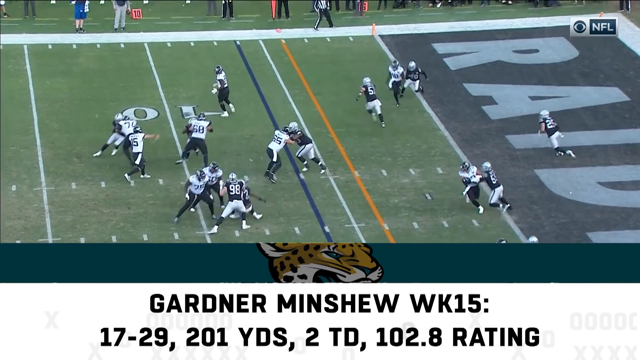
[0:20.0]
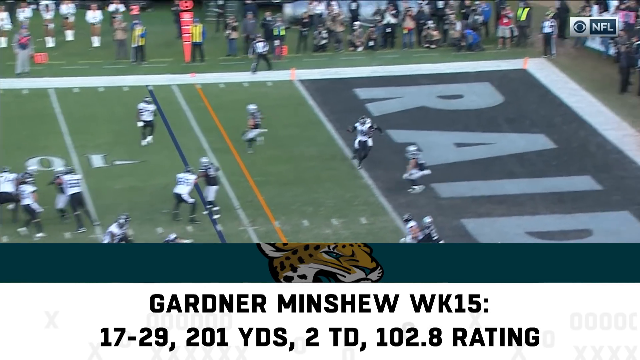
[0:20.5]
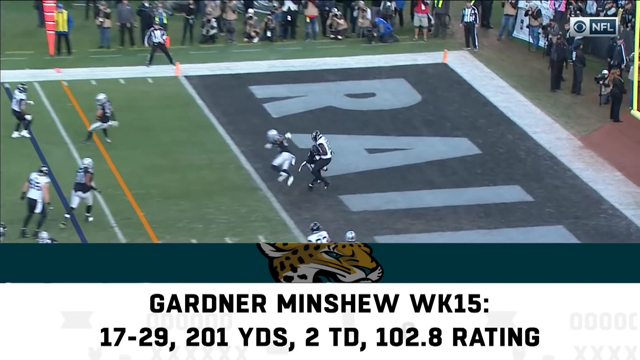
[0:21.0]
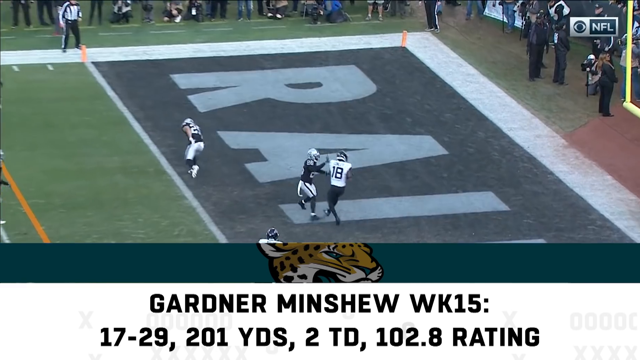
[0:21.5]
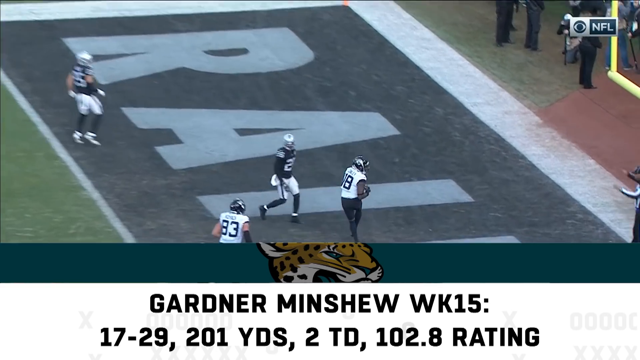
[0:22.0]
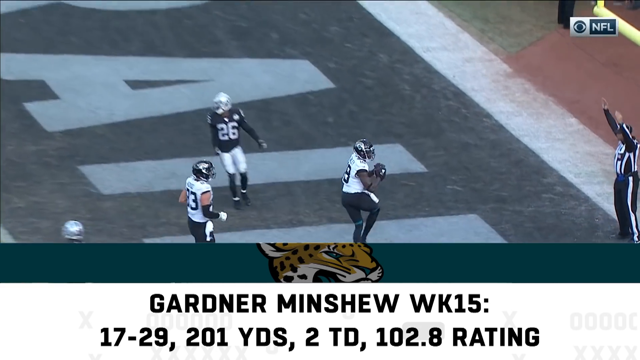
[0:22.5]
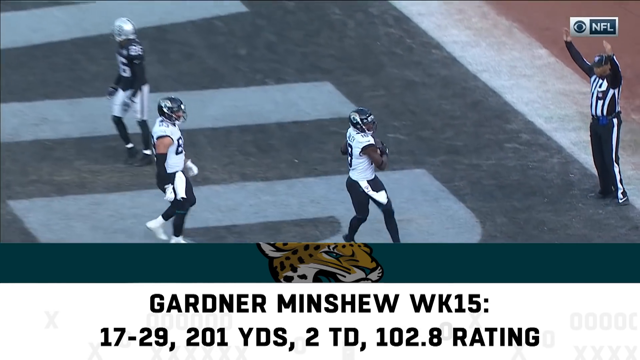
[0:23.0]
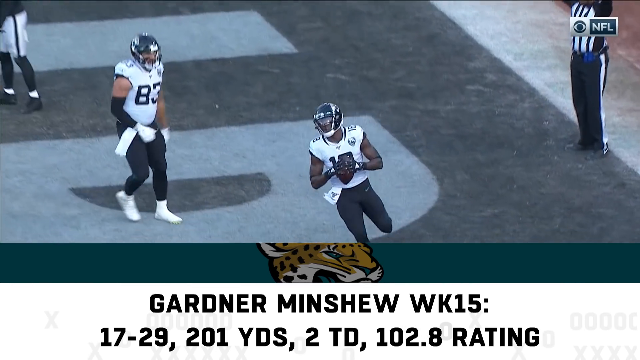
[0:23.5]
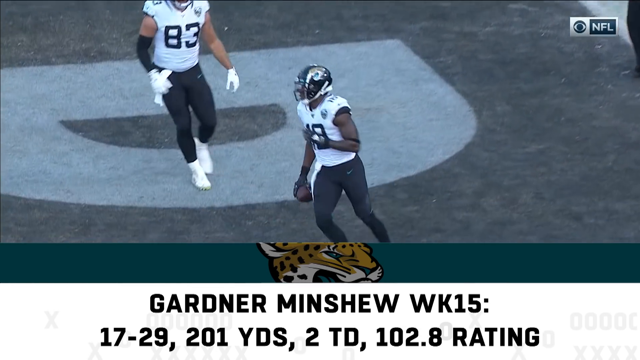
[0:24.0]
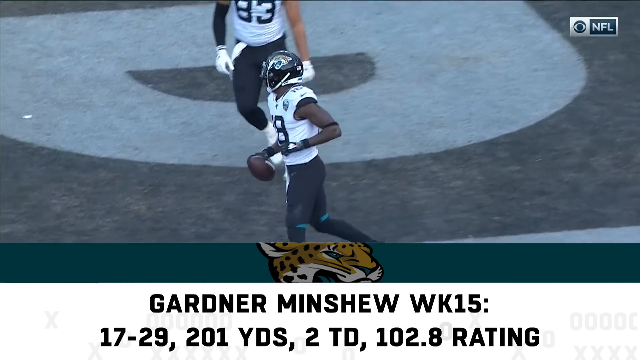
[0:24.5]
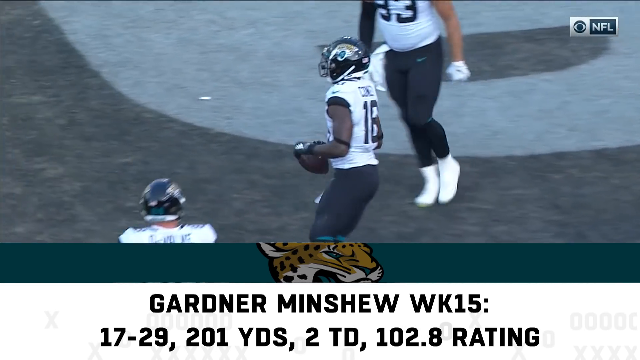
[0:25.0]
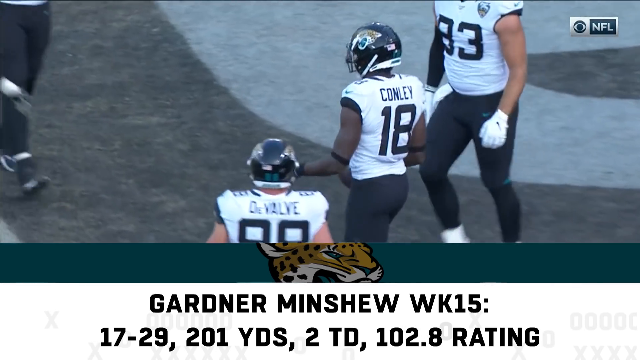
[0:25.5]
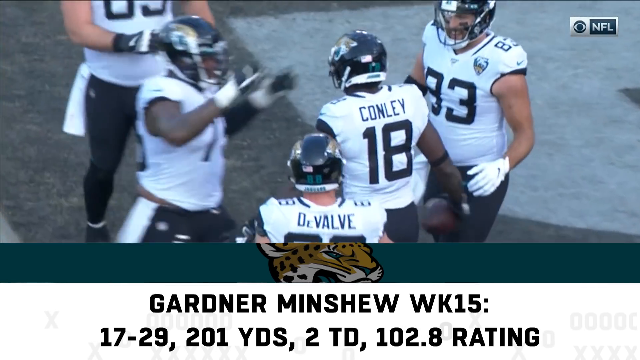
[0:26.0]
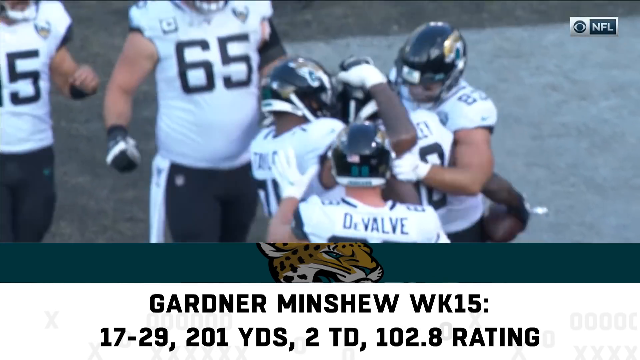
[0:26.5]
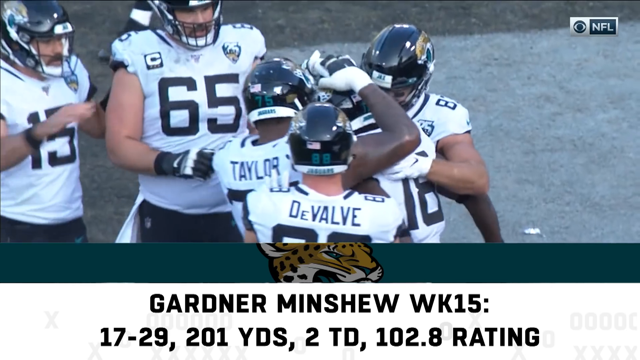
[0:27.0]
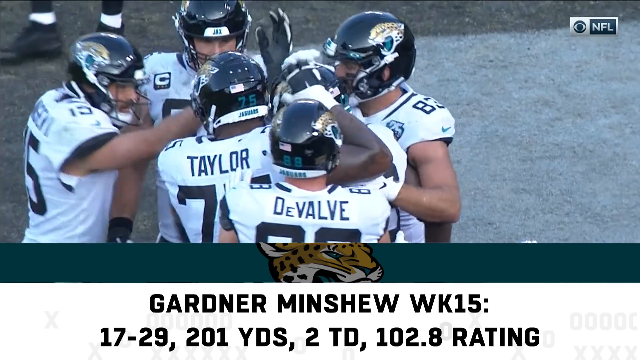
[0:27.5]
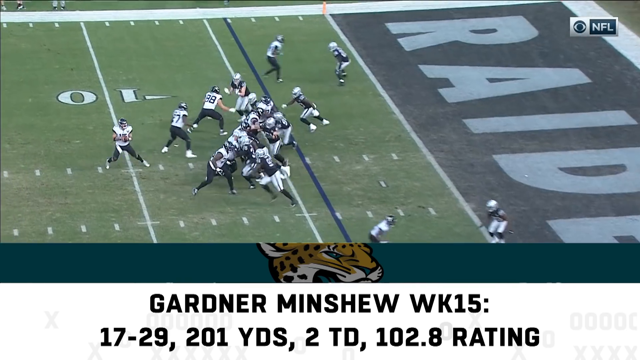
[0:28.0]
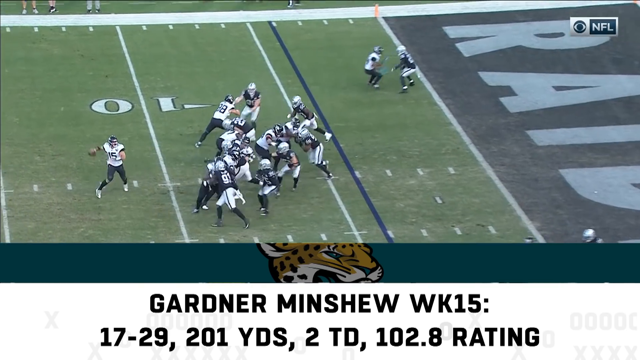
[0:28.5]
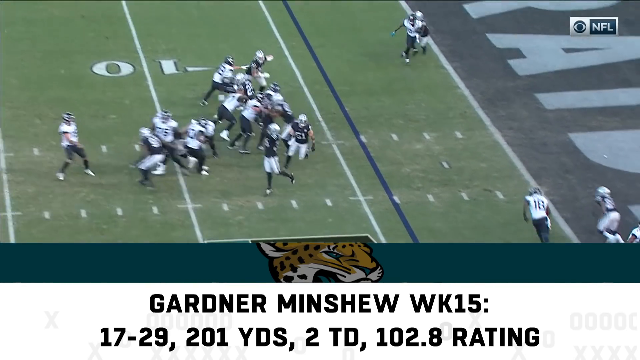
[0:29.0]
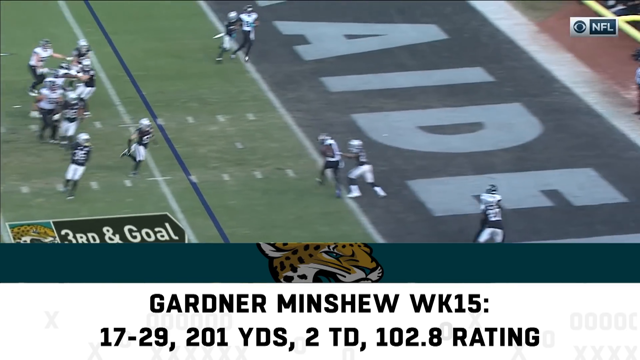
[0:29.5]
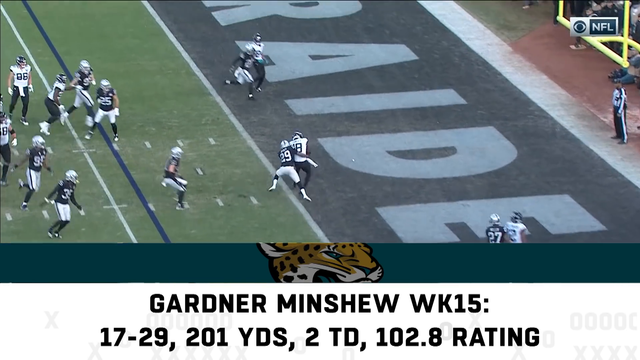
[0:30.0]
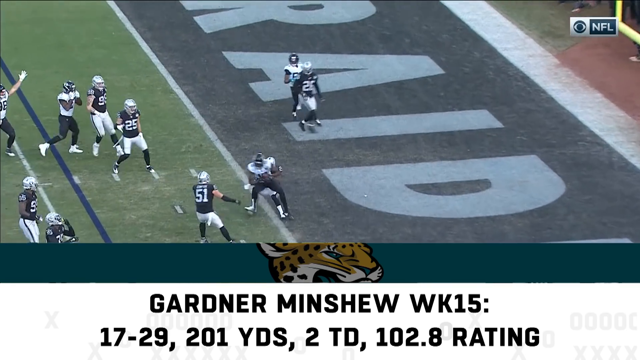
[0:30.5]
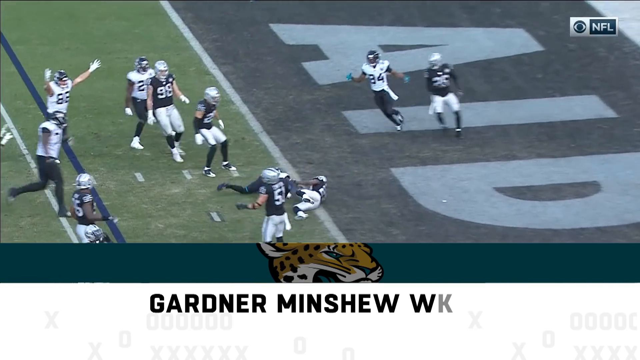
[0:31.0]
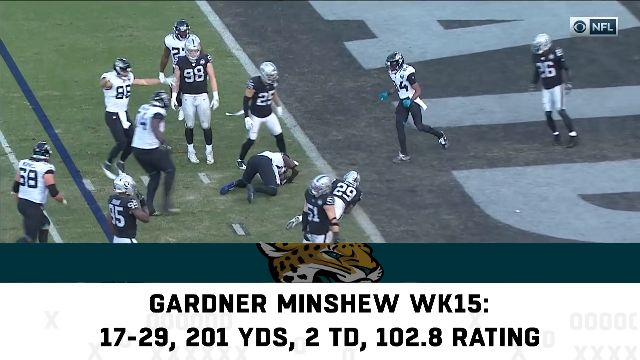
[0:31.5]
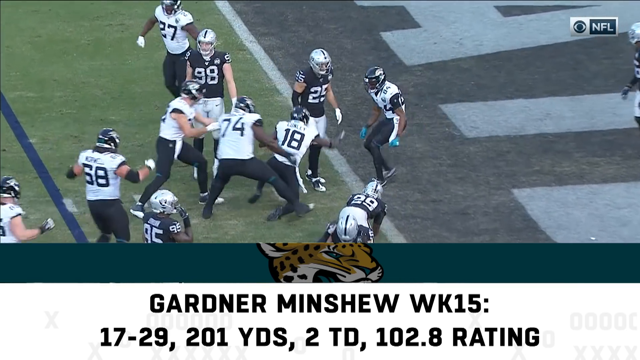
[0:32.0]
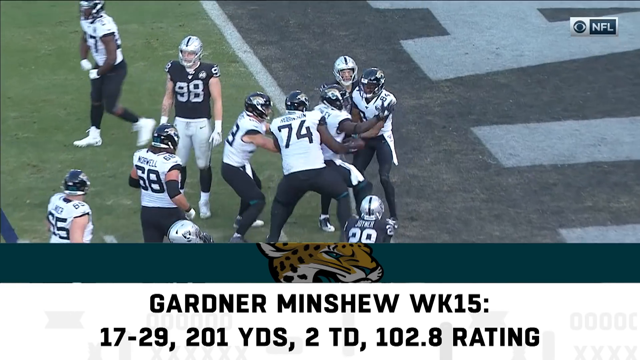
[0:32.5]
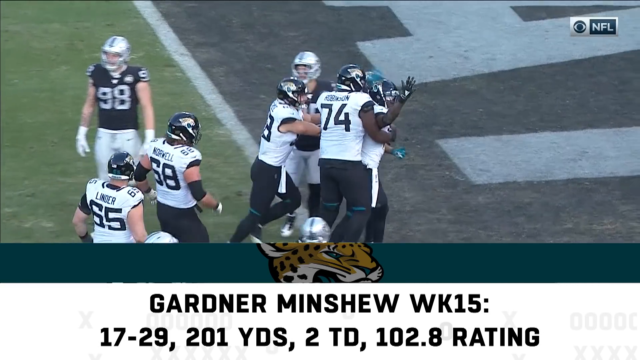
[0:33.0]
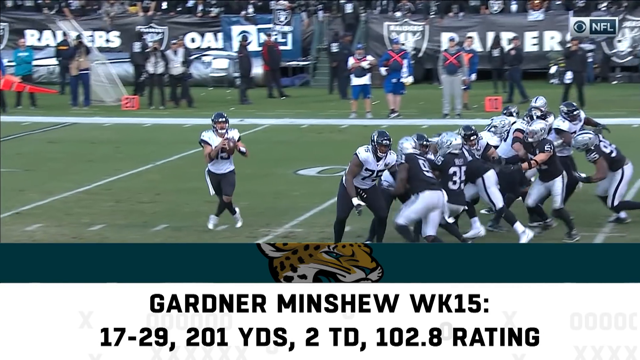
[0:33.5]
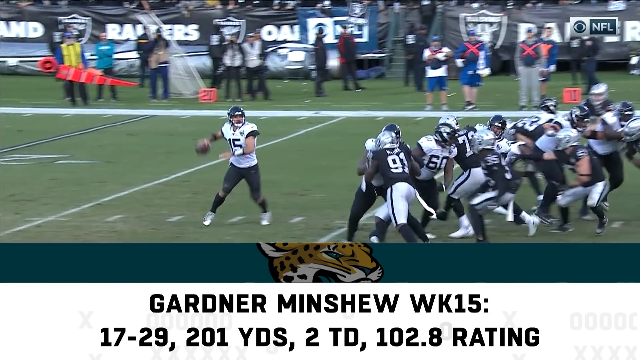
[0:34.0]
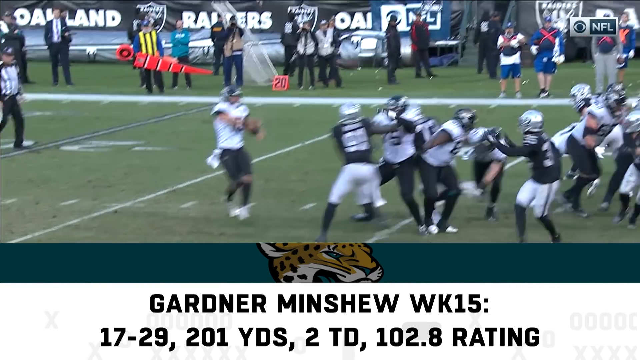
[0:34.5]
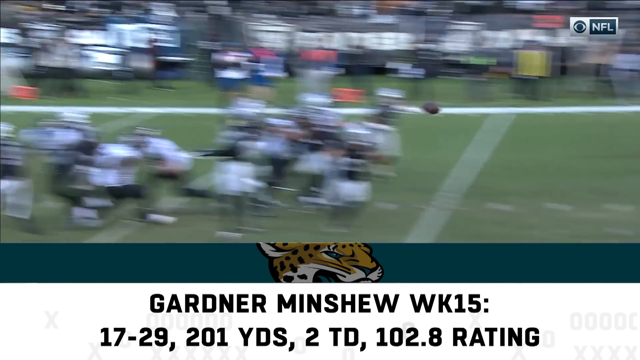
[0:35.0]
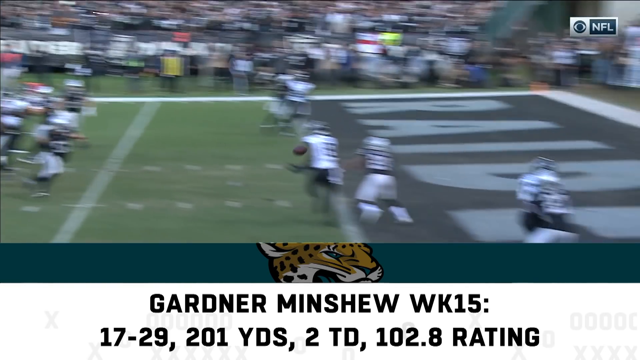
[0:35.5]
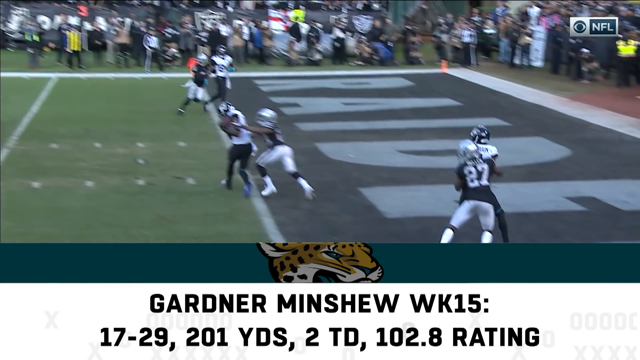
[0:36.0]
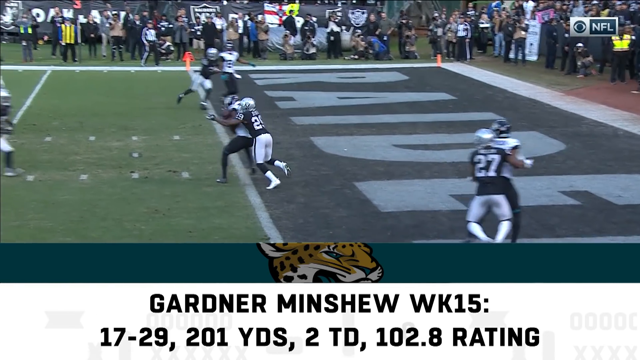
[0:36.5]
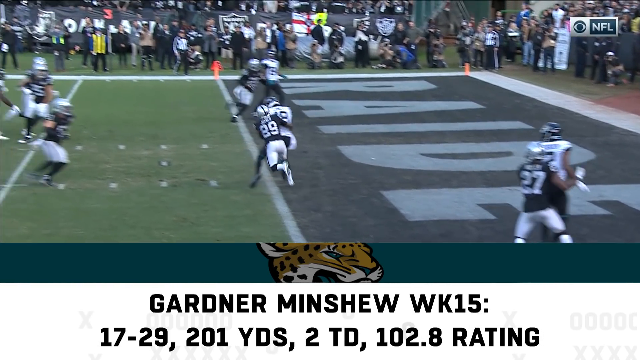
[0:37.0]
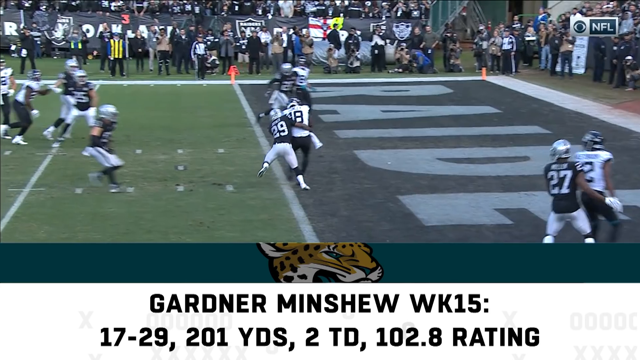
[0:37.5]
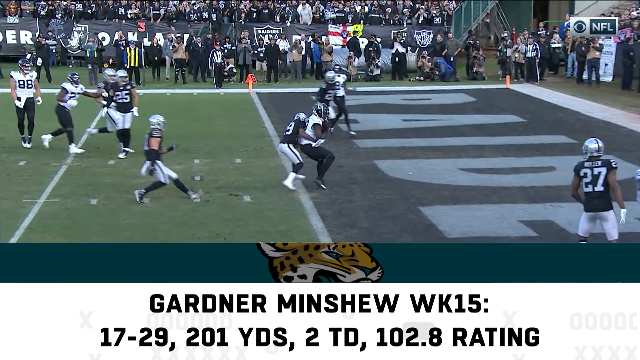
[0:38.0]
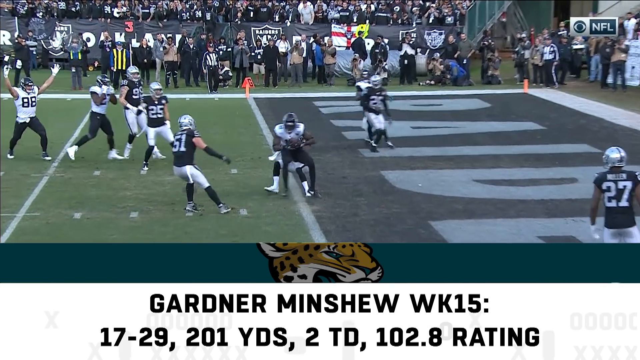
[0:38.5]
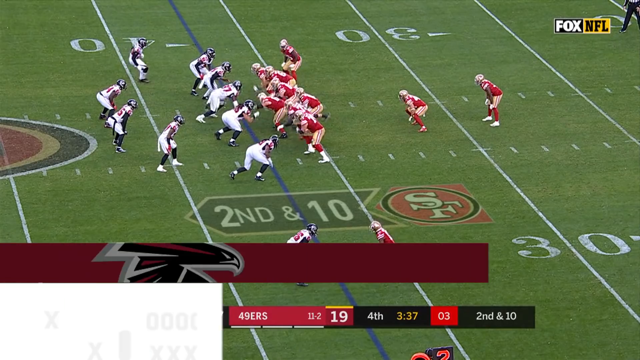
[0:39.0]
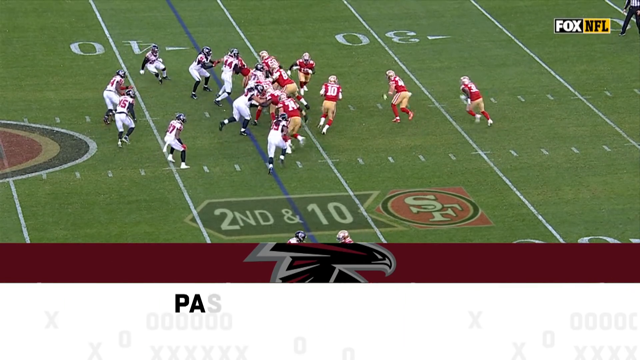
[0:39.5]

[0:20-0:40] A touchdown is scored on a pass by Conley of the Jacksonville Jaguars. The Jaguars then have another chance to score: the right-handed quarterback passes from the 12-yard line to a player on the zero-yard line for a touchdown. The short pass is thrown slightly behind the wide receiver, who catches it and holds it against his chest. Stats are then shown.